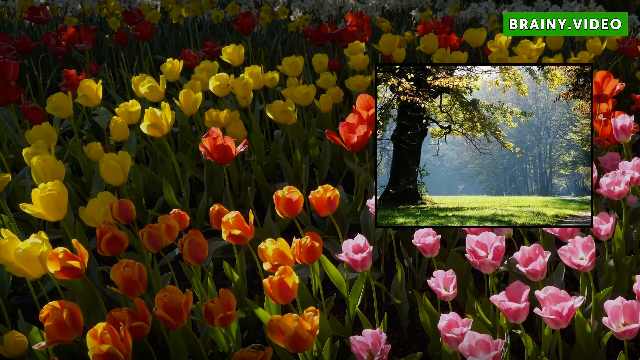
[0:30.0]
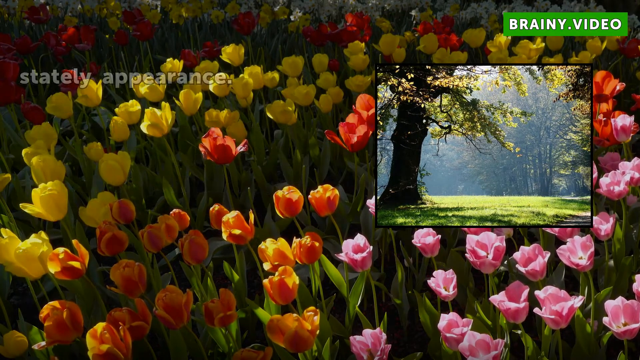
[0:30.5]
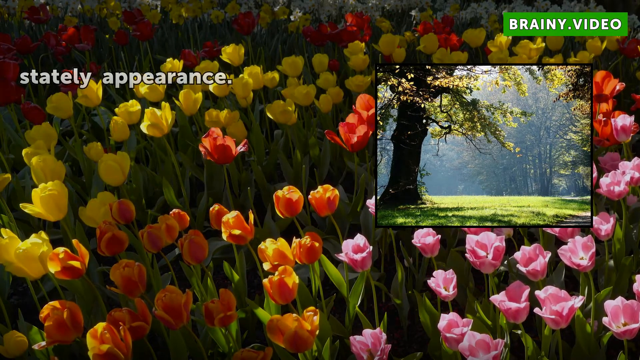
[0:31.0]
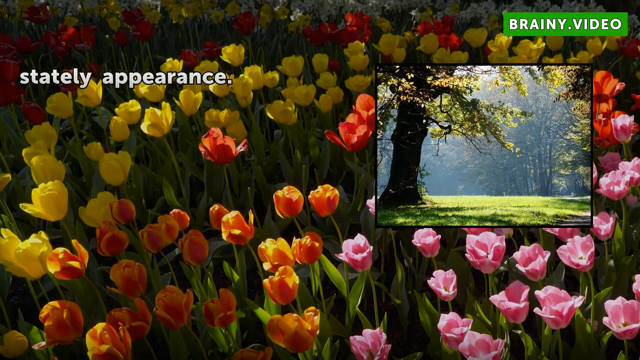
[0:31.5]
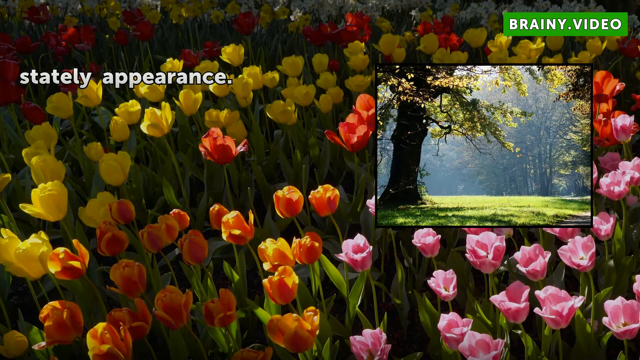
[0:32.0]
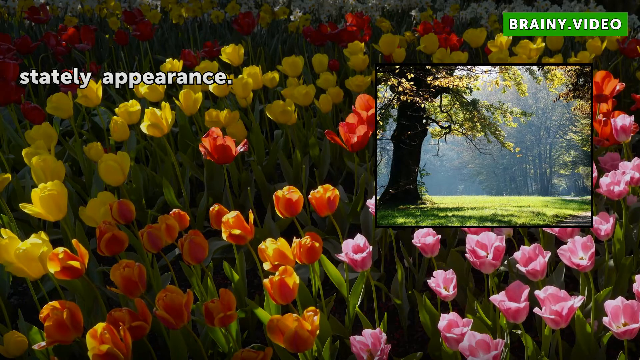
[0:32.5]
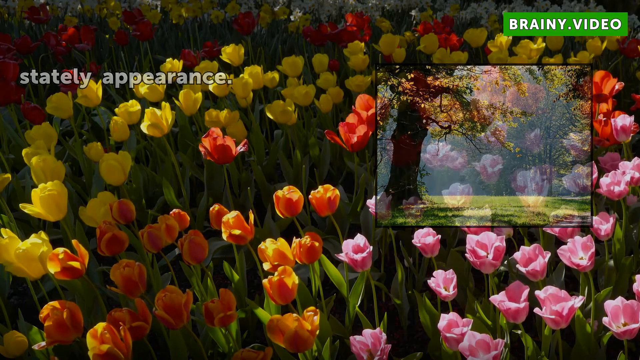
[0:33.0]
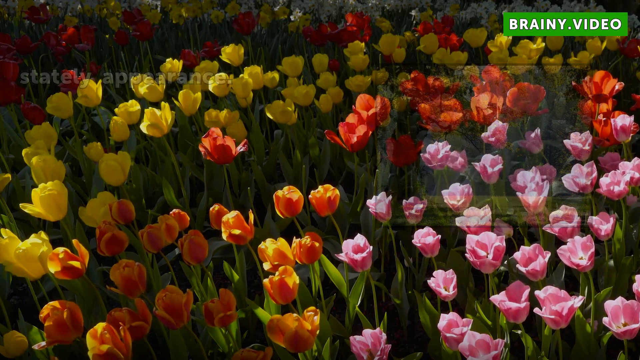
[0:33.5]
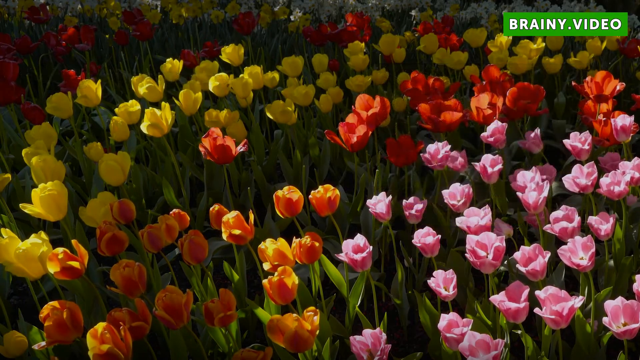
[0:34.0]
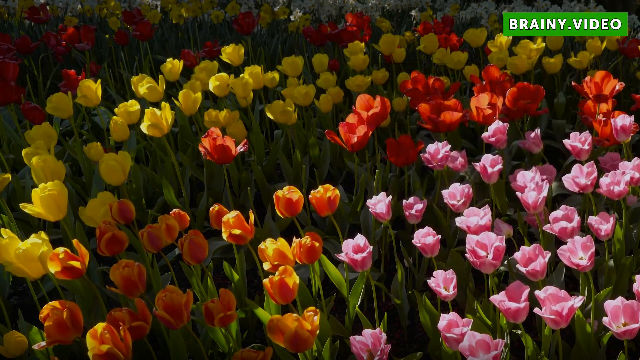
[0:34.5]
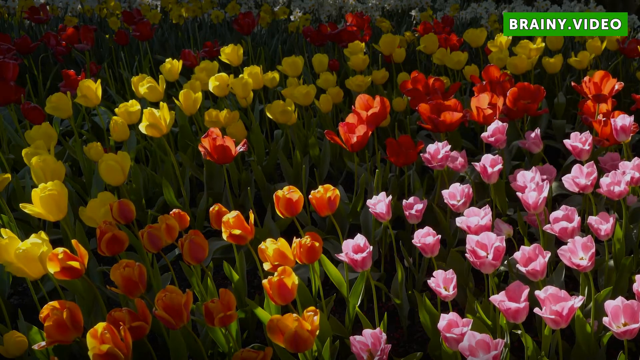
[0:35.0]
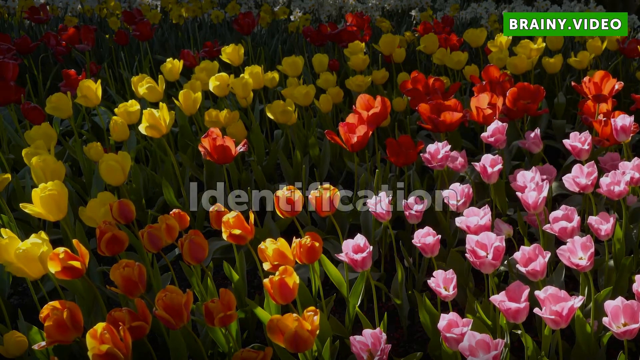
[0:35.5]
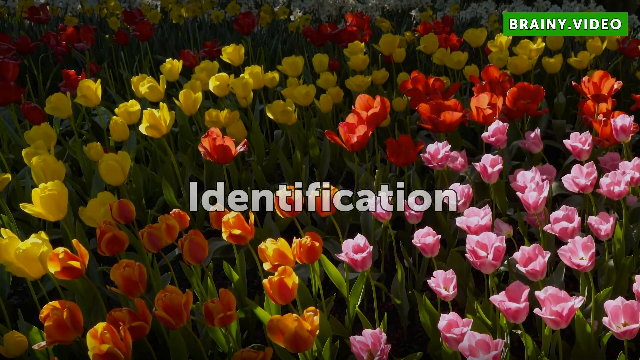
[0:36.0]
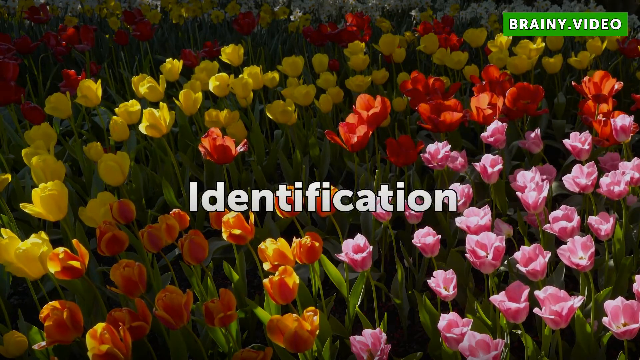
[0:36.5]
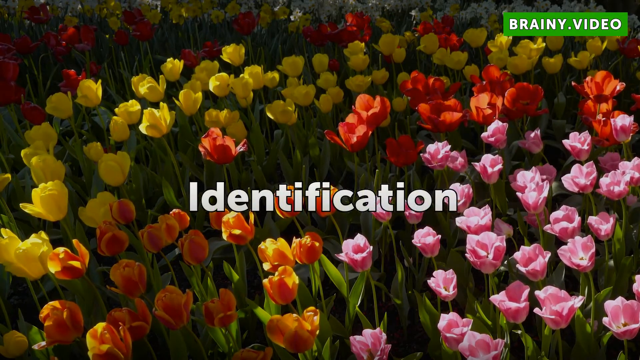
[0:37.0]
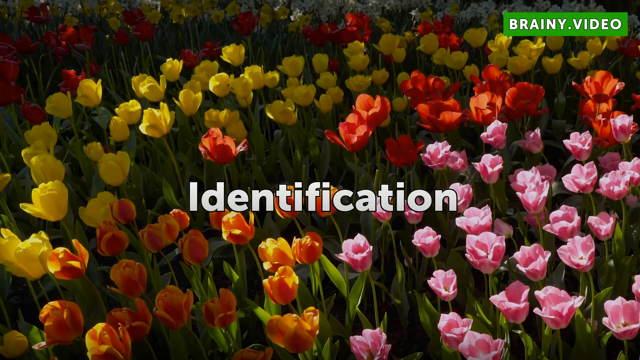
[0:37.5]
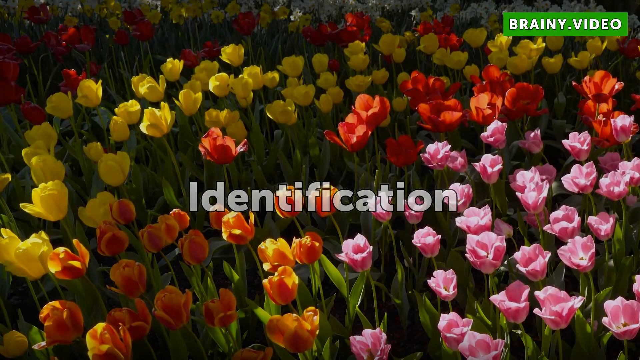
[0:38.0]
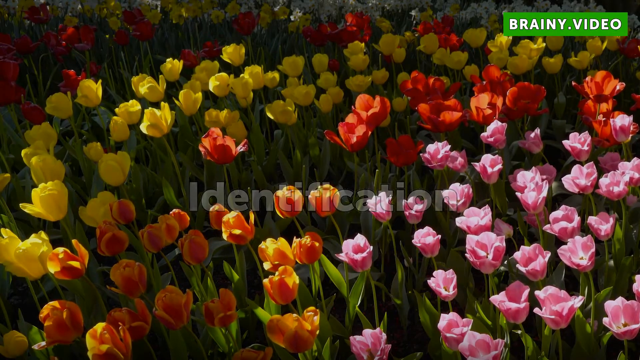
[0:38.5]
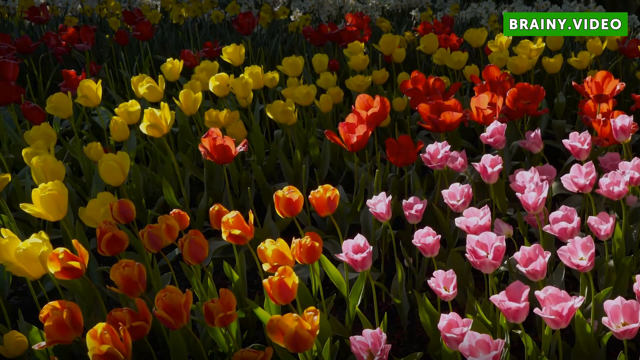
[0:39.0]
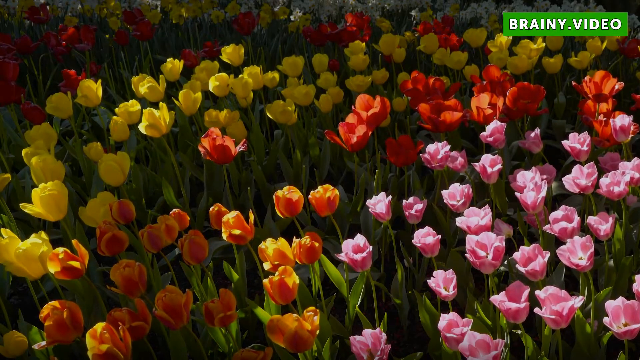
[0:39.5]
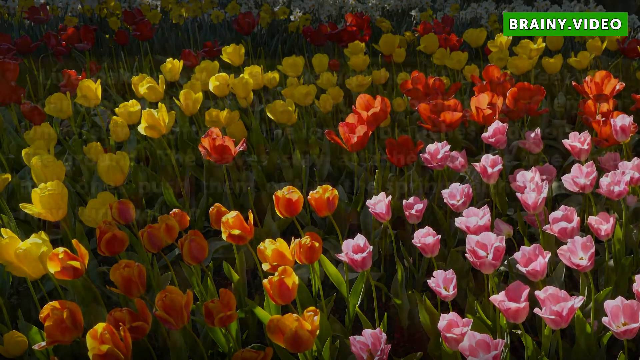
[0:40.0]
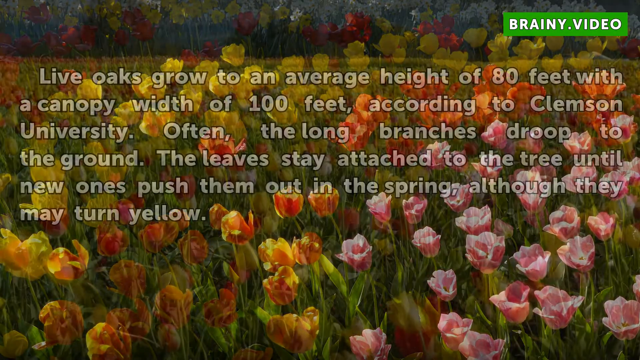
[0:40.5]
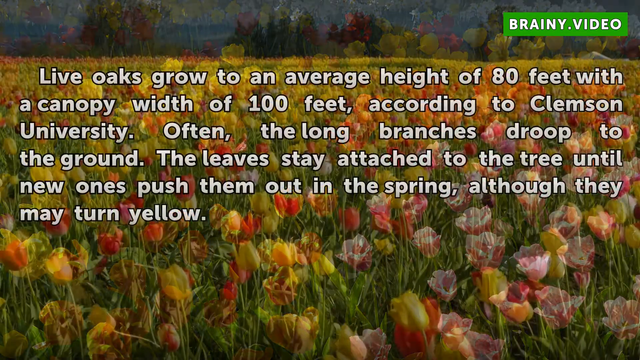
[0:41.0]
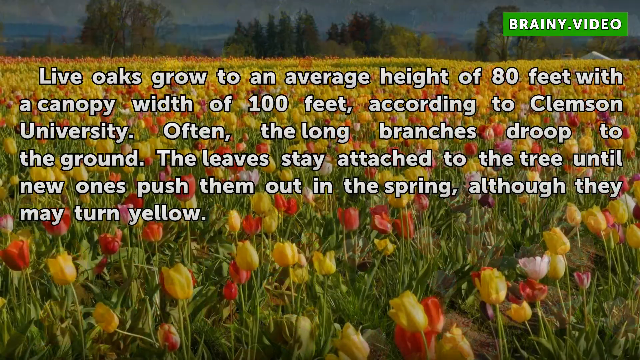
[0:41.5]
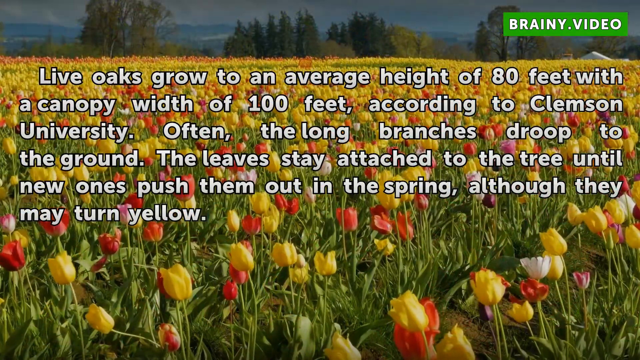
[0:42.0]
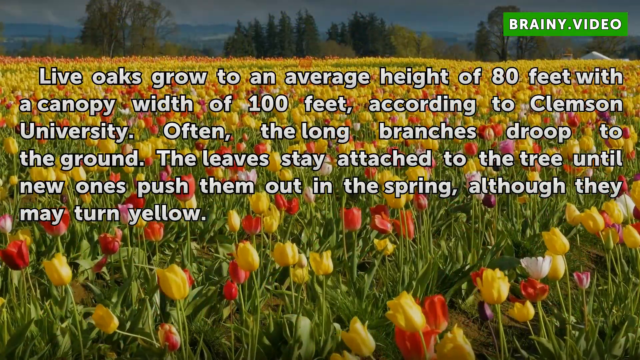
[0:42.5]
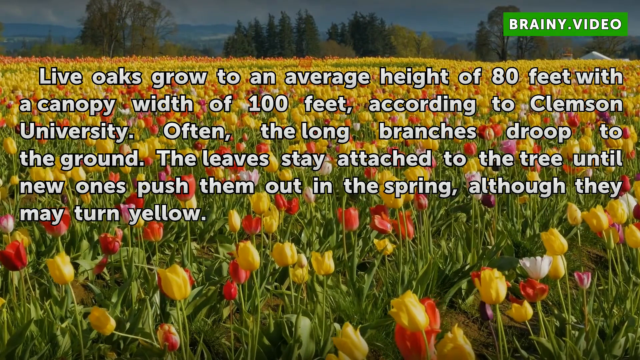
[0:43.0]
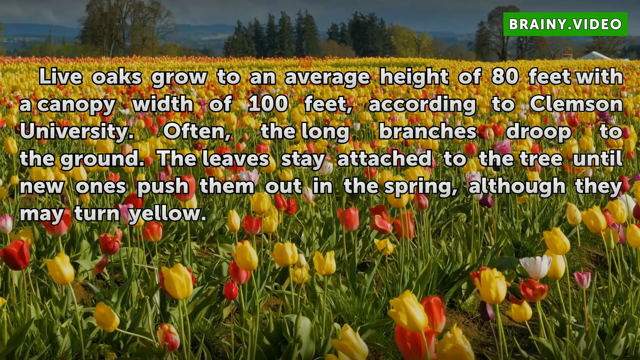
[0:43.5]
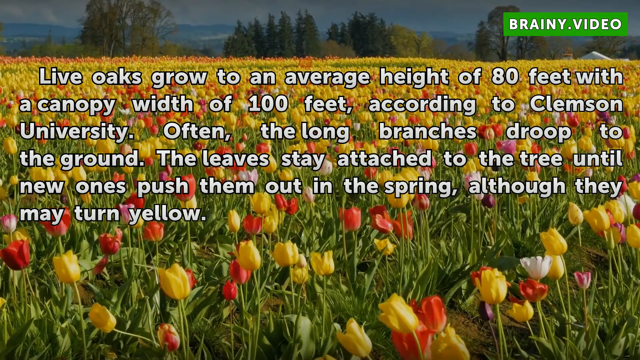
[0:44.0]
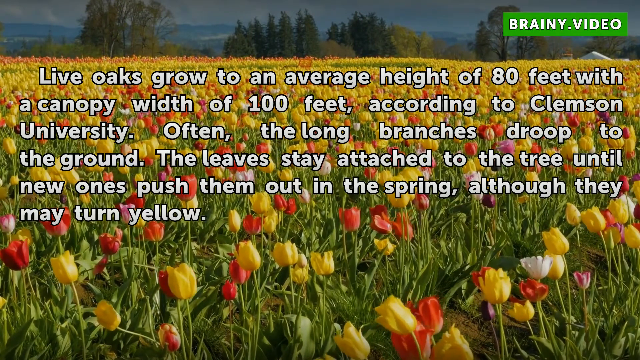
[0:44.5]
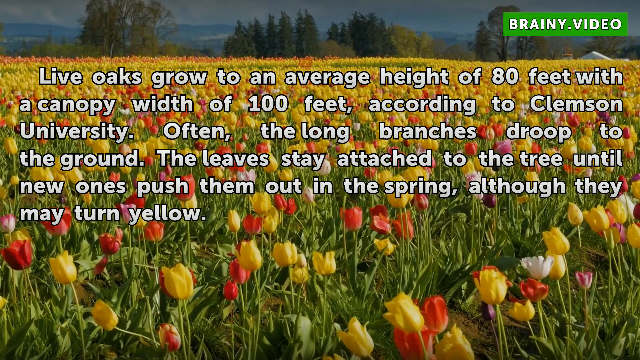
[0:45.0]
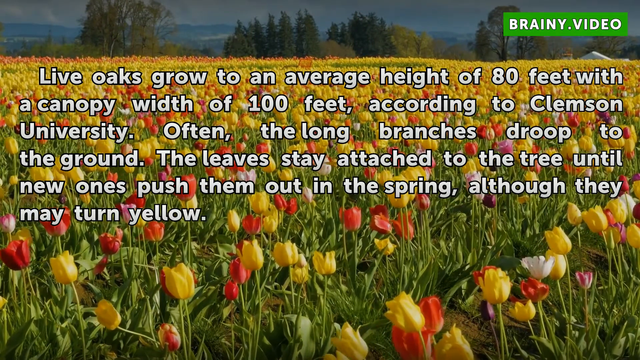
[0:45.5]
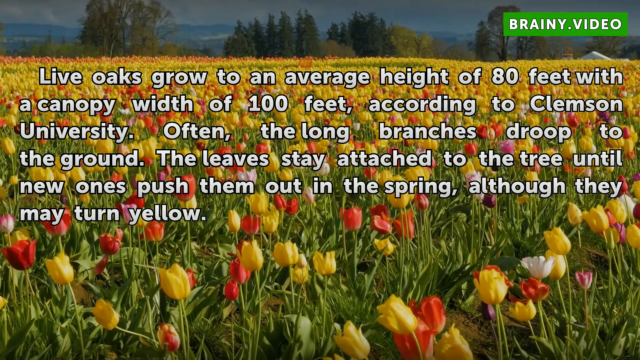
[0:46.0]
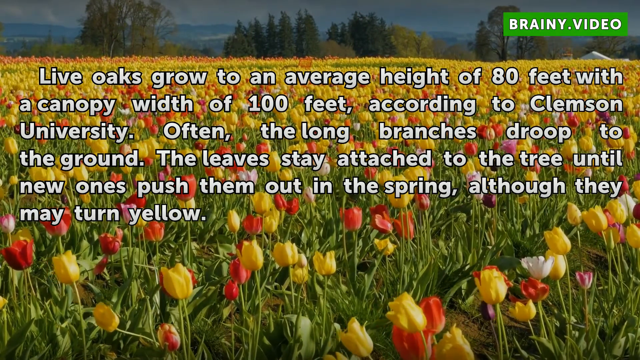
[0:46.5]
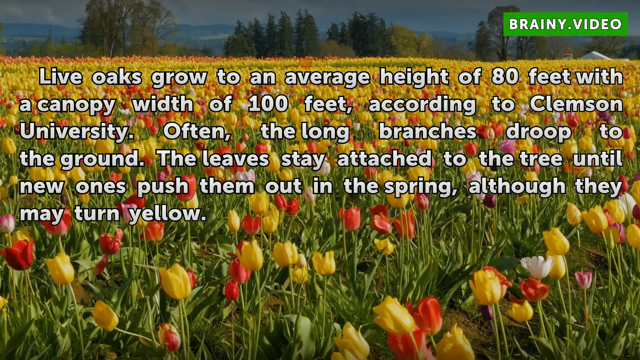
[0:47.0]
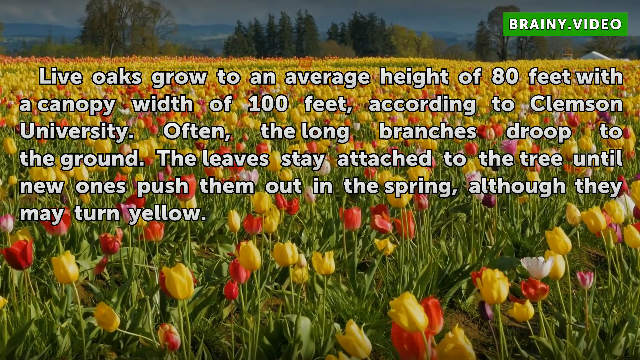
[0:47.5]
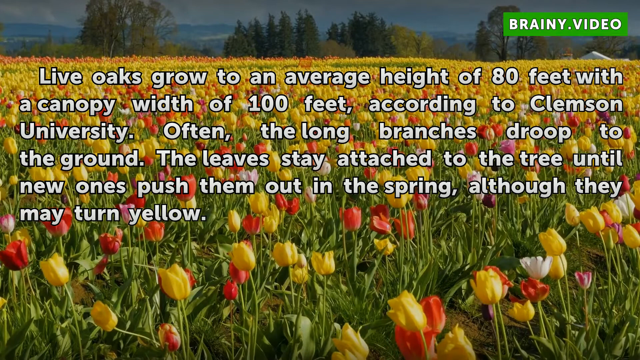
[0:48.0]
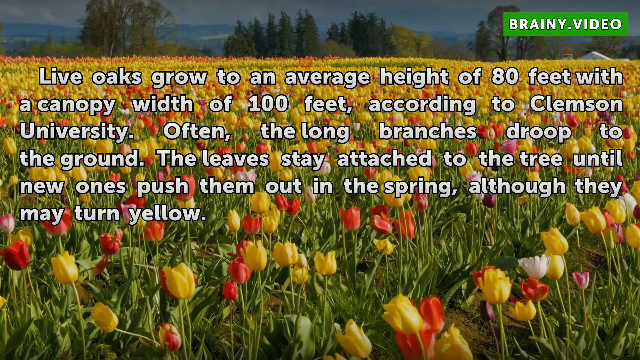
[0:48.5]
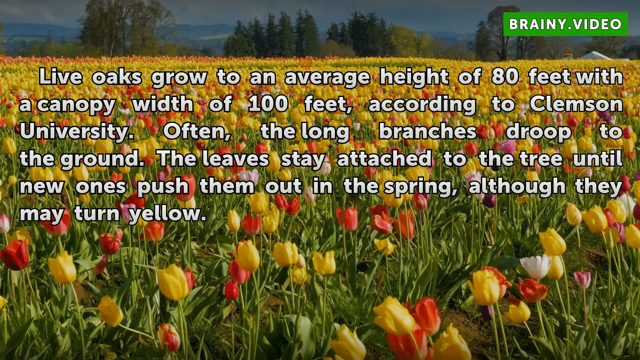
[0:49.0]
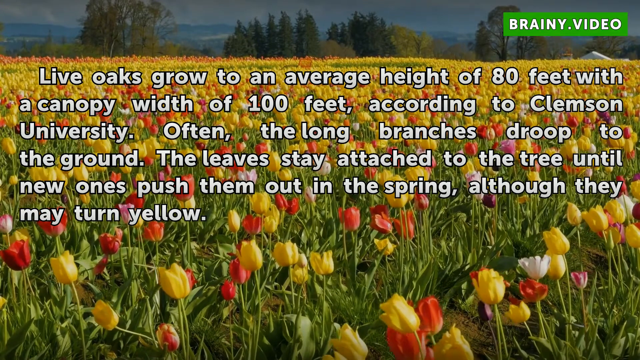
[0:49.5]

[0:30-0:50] The words on the left change, and "stately appearance" appears there. The words then disappear, along with the picture of the tree on the right, leaving only the background of colorful flowers. The word "identification" appears in the middle and then disappears. Text appears on the upper half of the screen: "live oaks grow to an average height of 80 feet with a canopy width of 100 feet according to Clemson University. Often the long branches droop to the ground. The leaves stay attached to the tree until new ones push them out in the spring. Although they may turn yellow." The background has changed to a different picture of flowers, which is a video: the flowers swing back and forth in the wind. They are multiple colors, some yellow and red and some purple and white, with yellow flowers the majority and red flowers the next most common.